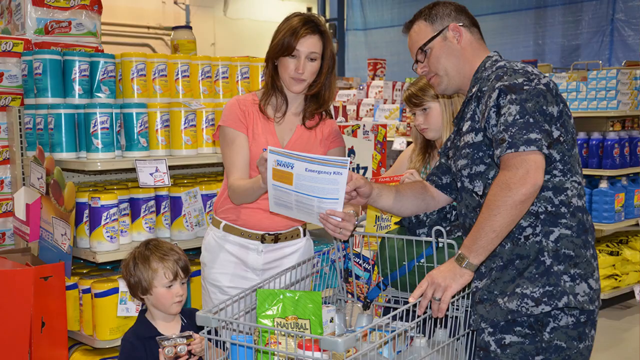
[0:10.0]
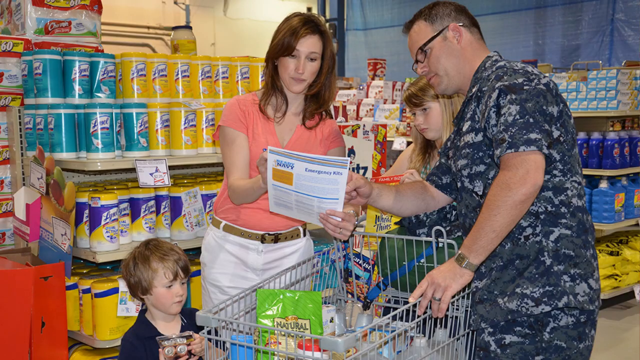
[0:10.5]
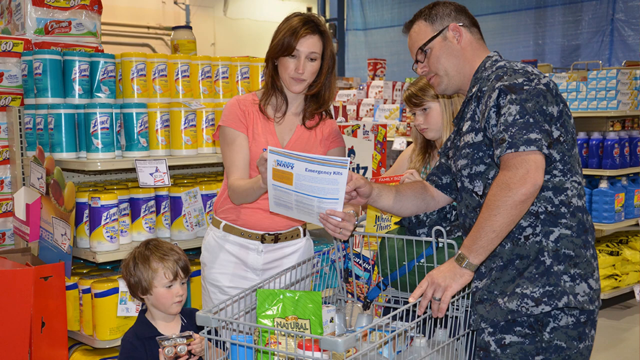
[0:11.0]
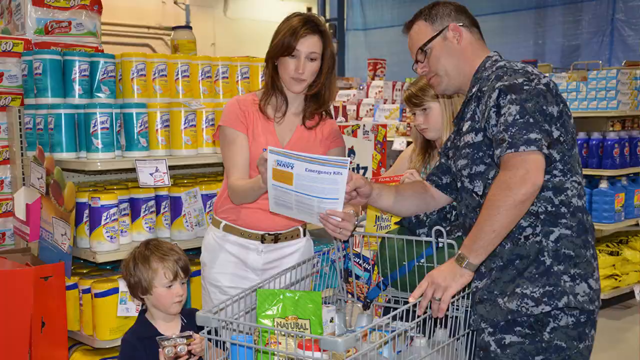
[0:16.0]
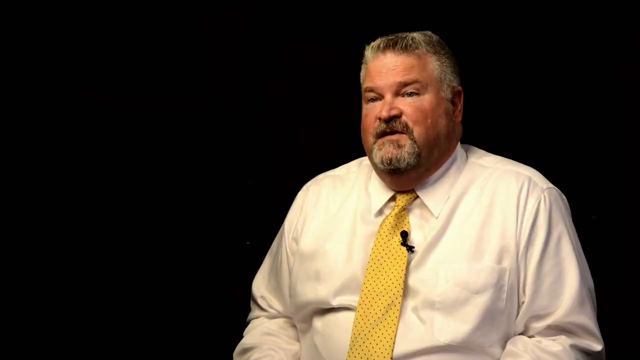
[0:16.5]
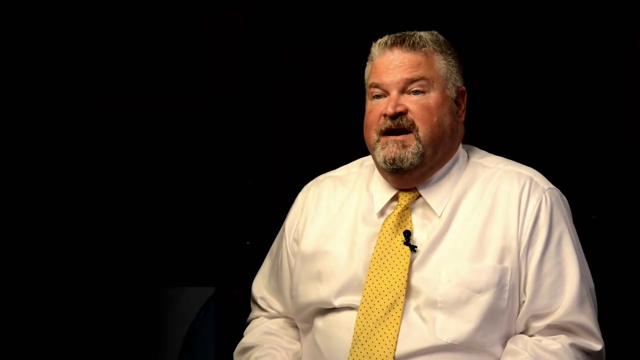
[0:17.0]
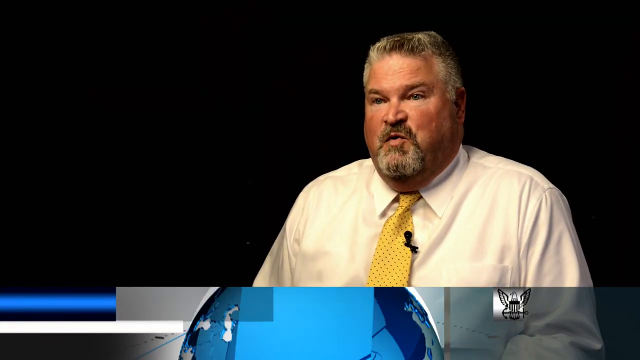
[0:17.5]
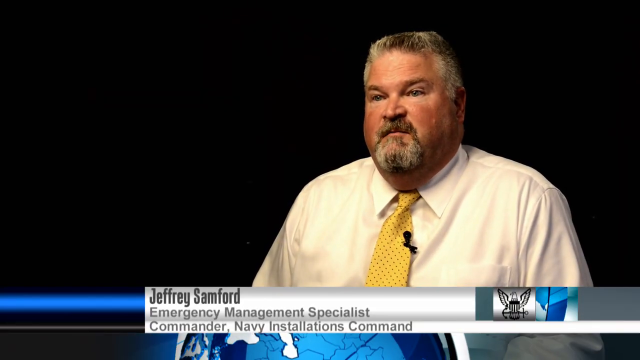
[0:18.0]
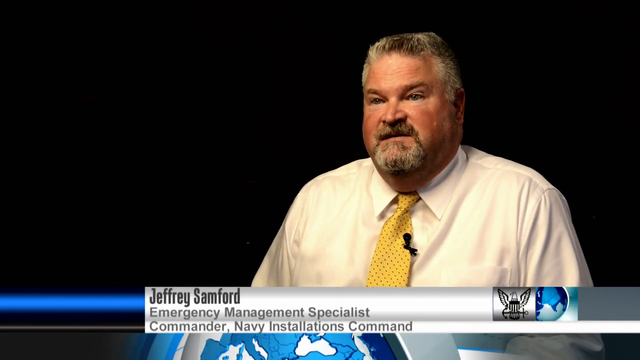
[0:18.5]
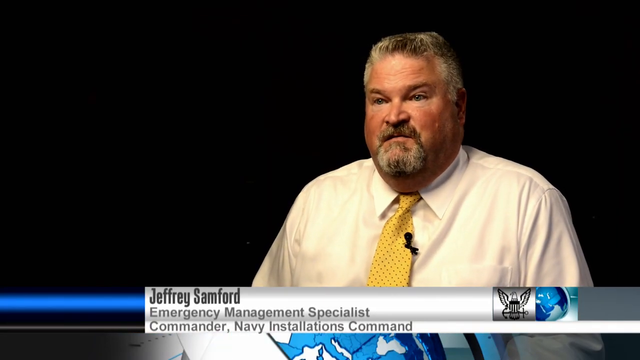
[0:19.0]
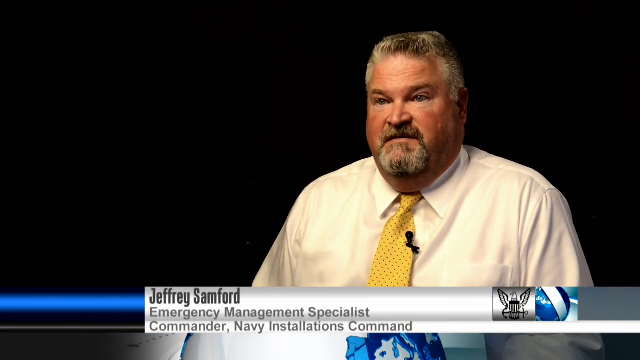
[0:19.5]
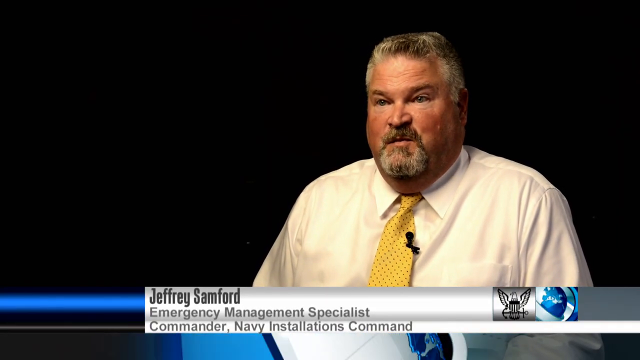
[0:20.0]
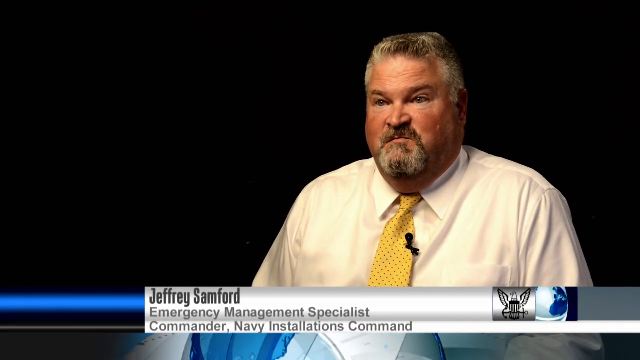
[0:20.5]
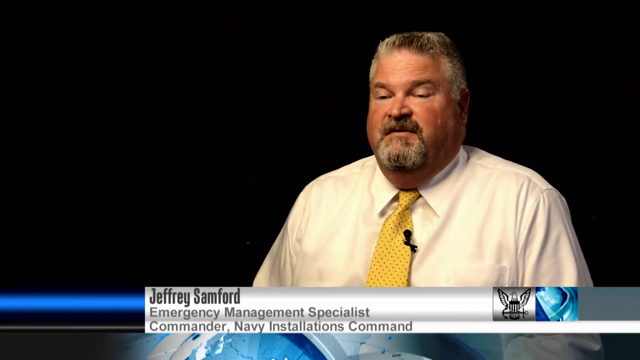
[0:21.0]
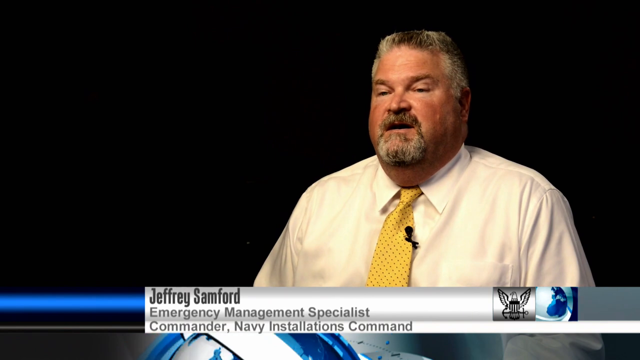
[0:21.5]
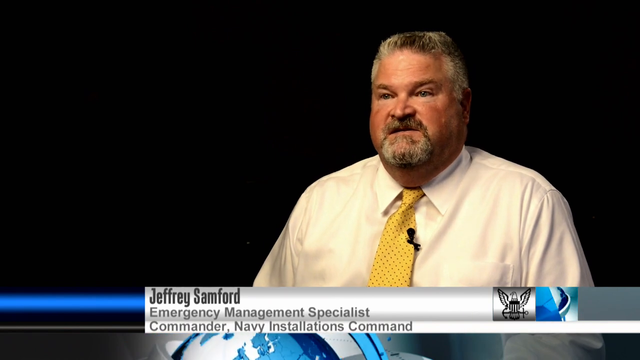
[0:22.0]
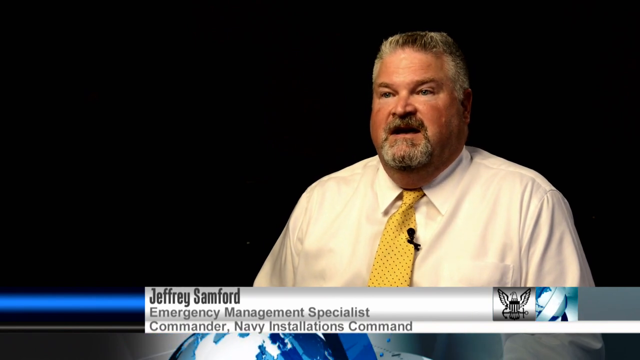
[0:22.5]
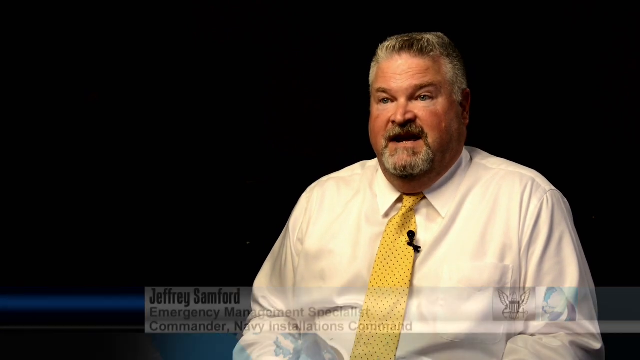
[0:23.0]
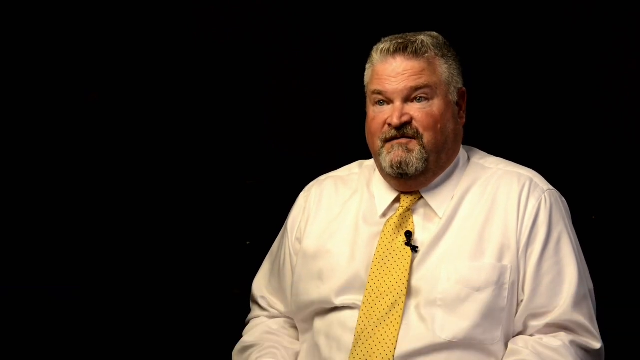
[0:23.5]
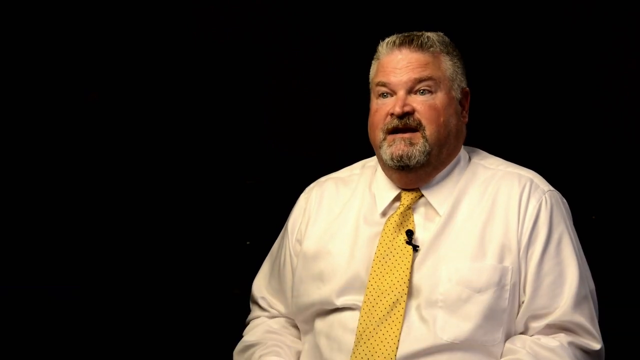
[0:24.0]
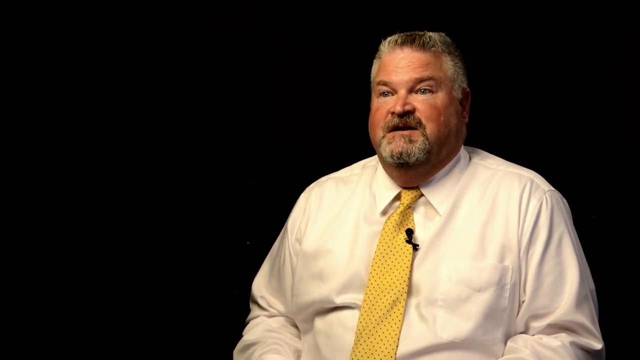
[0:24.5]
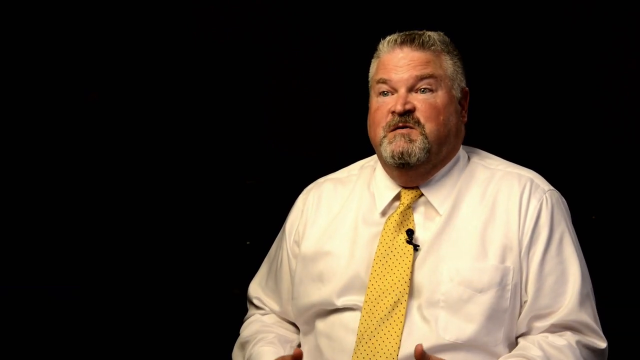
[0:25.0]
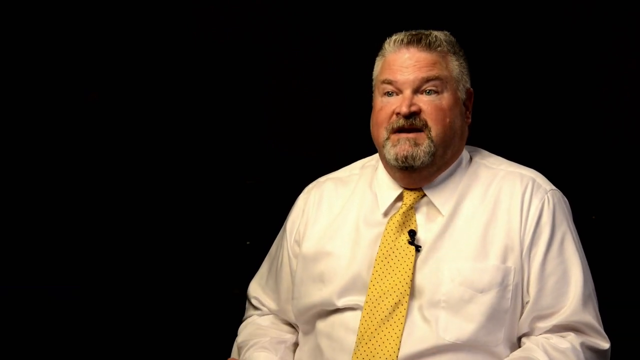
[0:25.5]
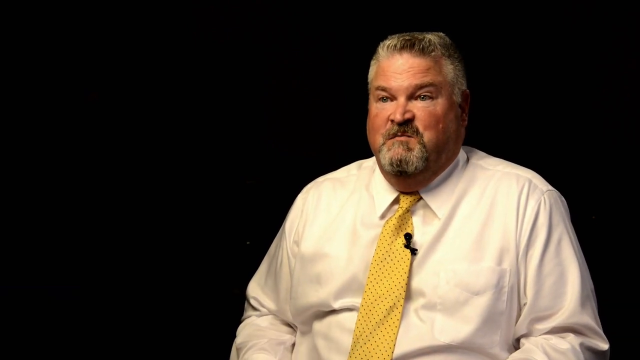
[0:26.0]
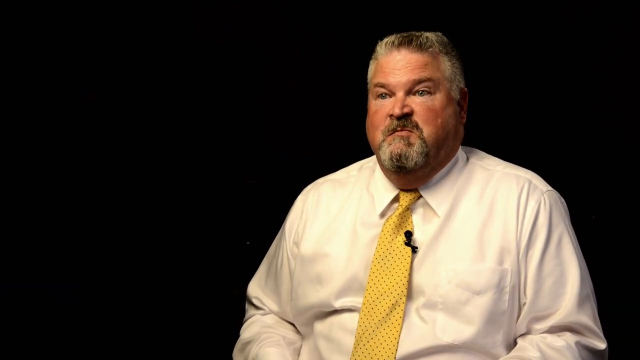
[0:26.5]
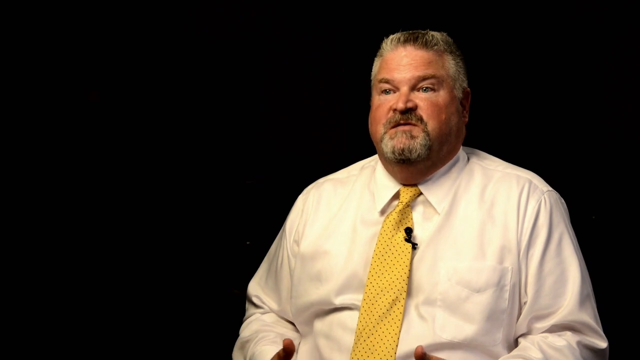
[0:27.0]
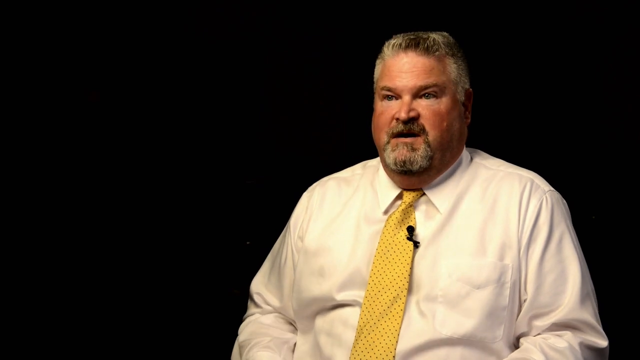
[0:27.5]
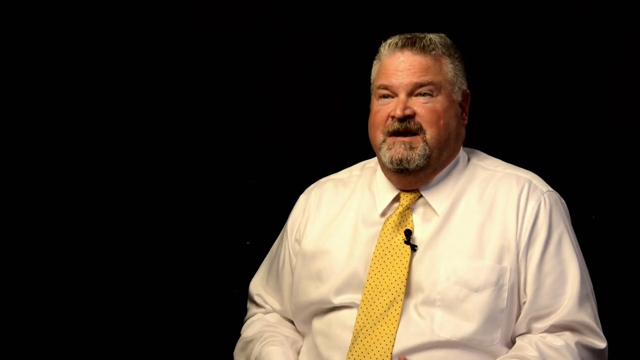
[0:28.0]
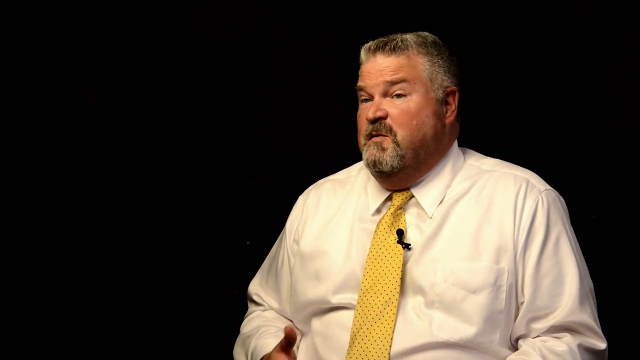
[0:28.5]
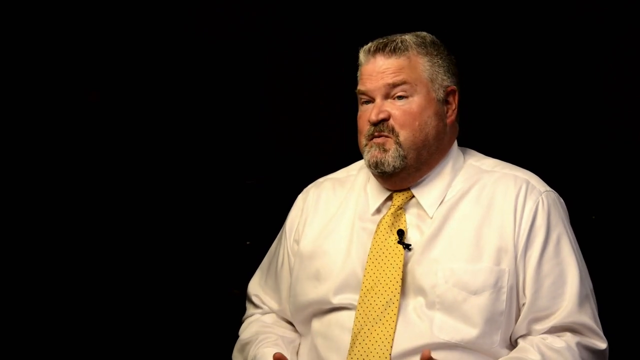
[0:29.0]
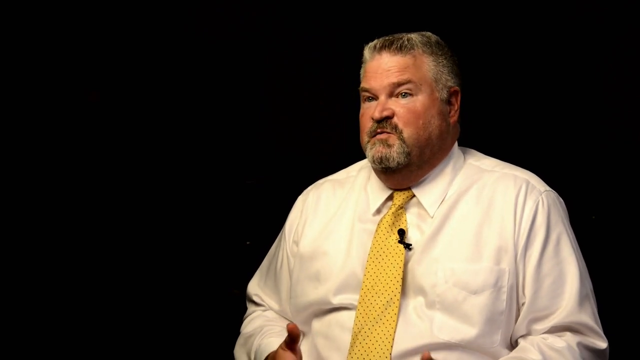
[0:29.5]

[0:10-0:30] In a grocery store, four family members look at a shopping list, which is some sort of official catalog with colors and different texts. The store aisle has Lysol, wipes, large bulk packs of Charmin tissues, and dishwashing detergent, and on the bottom shelf on the floor there is a yellow bag of ground salt, sand or kitty litter. The scene cuts to a black background with a Caucasian man who has gray hair, a beard and a mustache, and wears a yellow tie and a white shirt with sleeves. A banner comes up reading "Jeffrey Sanford," identifying him as the Emergency Management specialist. As he talks, he nods his head and blinks, keeping his arms down at his sides and never raising them toward the camera.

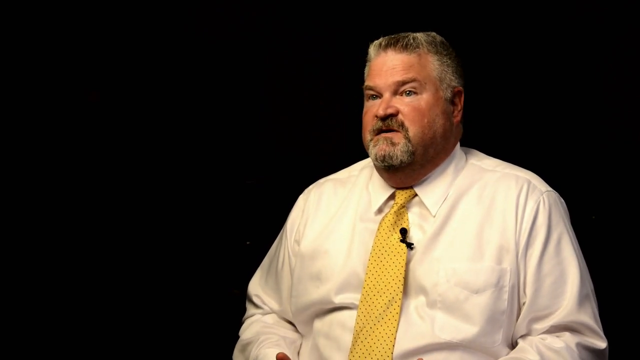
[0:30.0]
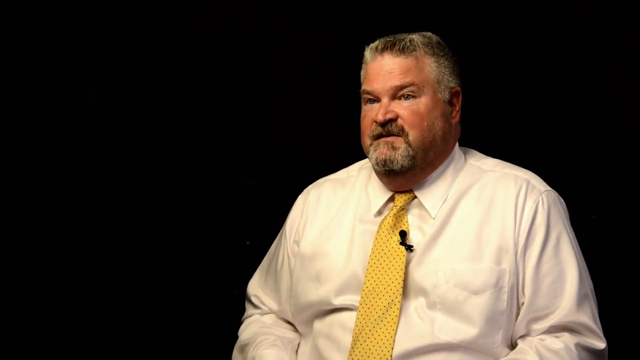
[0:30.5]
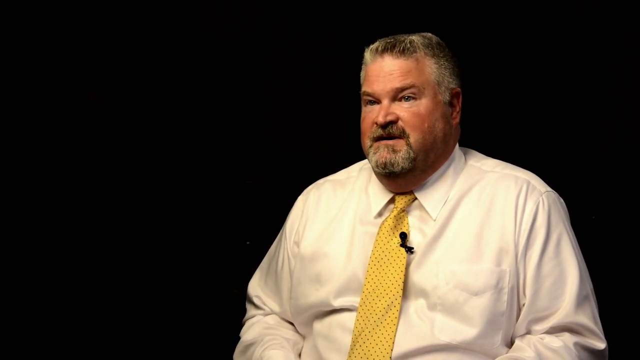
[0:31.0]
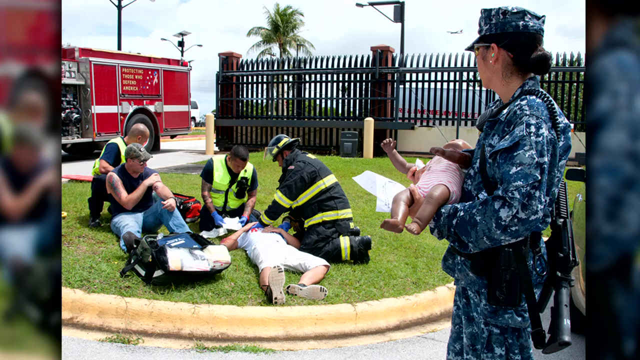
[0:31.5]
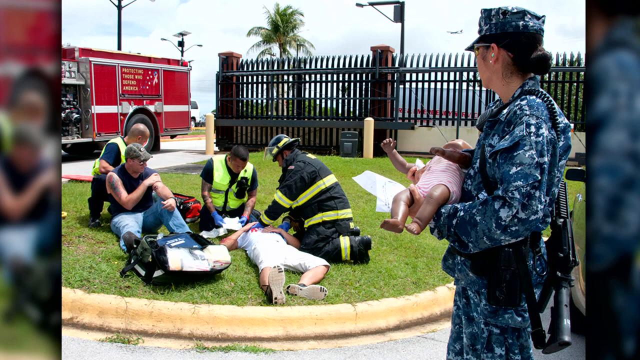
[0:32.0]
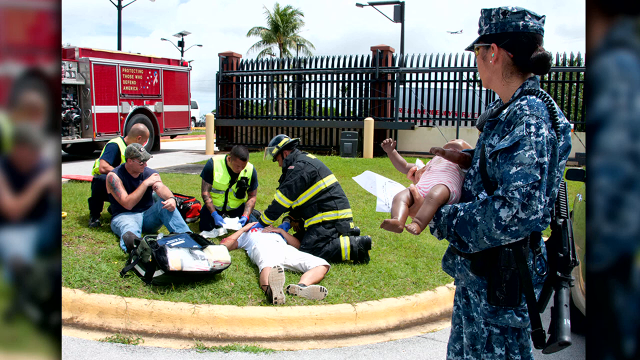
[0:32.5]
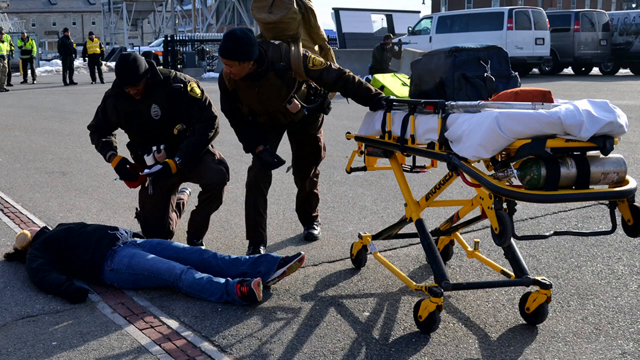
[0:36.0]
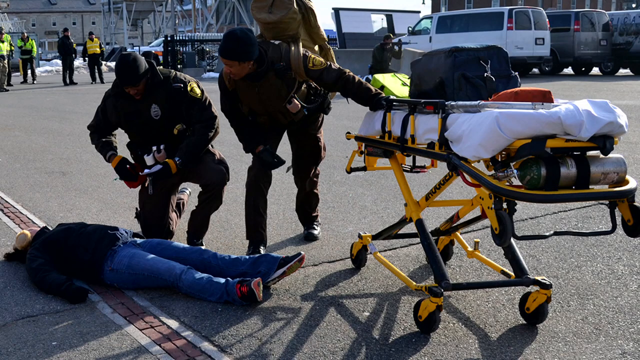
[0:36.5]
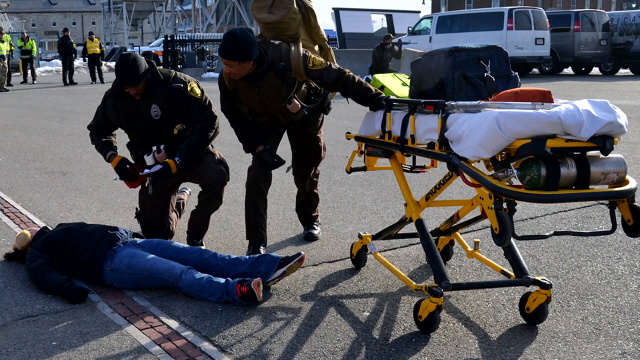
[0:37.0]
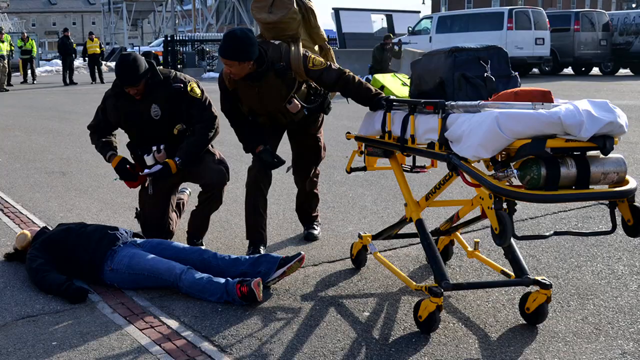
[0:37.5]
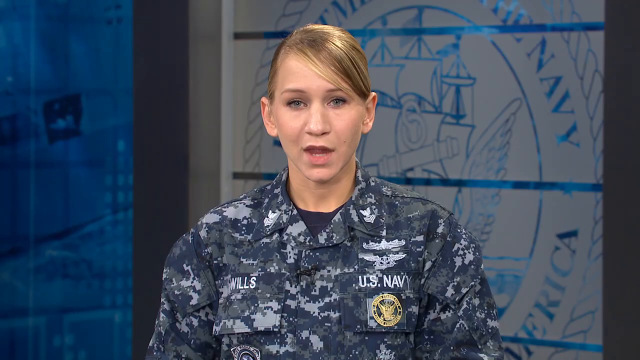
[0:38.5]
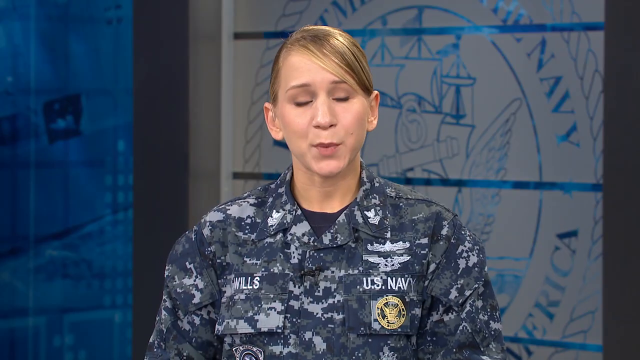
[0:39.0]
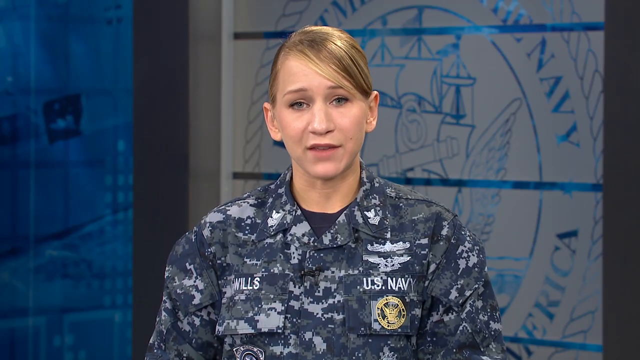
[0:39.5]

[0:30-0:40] The video cuts to Jerry Stanford, who wears a white shirt and a yellow tie with a microphone on the tie, sitting in front of a black background. He talks while nodding his head and keeping his hands at his sides. The scene then cuts to an outside area where some people are practicing CPR and some fire safety. A Navy SEAL in camouflage has an AK or an M4 carbine rifle strapped to her back and carries a plastic doll that looks like a baby.